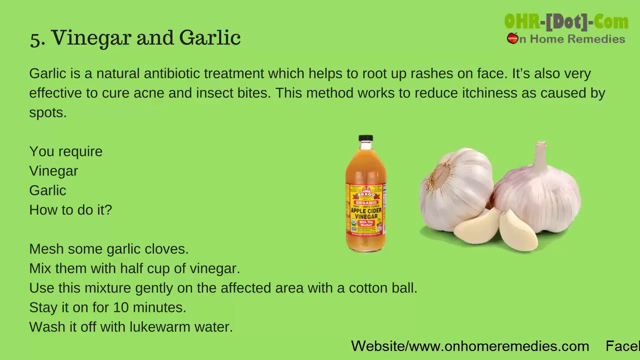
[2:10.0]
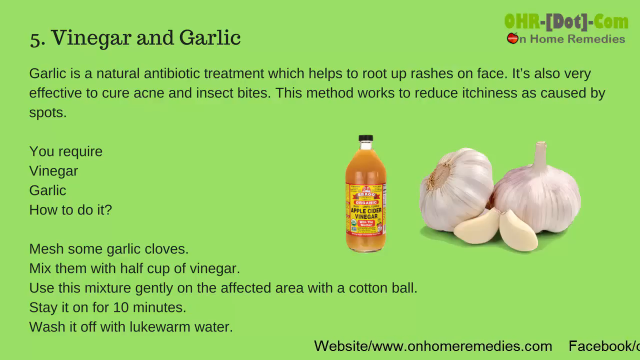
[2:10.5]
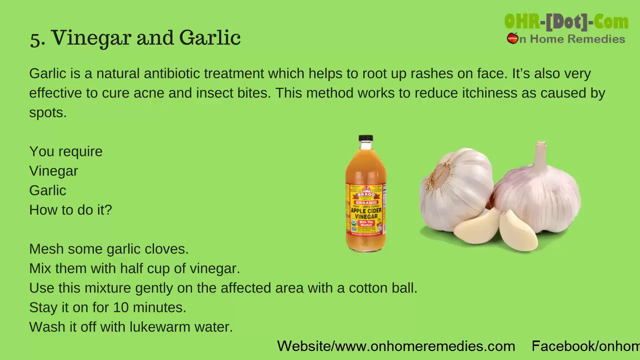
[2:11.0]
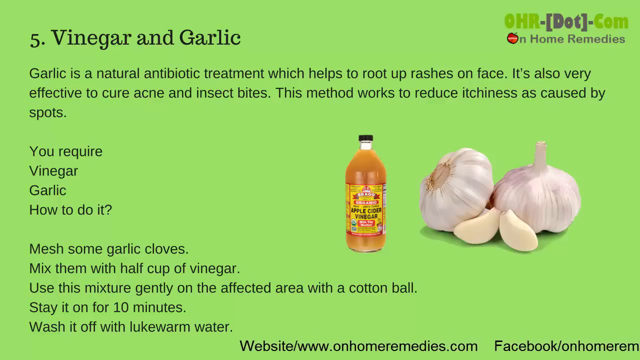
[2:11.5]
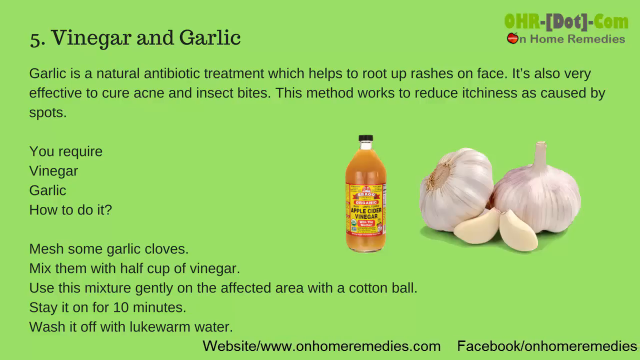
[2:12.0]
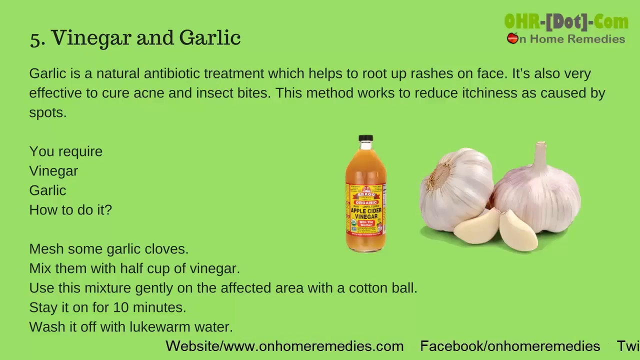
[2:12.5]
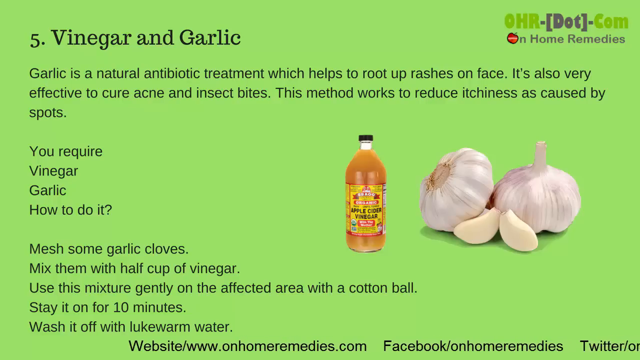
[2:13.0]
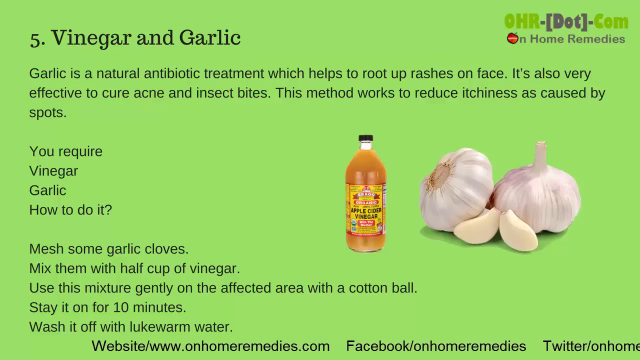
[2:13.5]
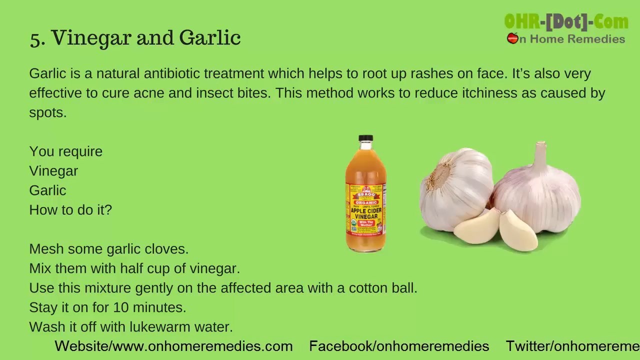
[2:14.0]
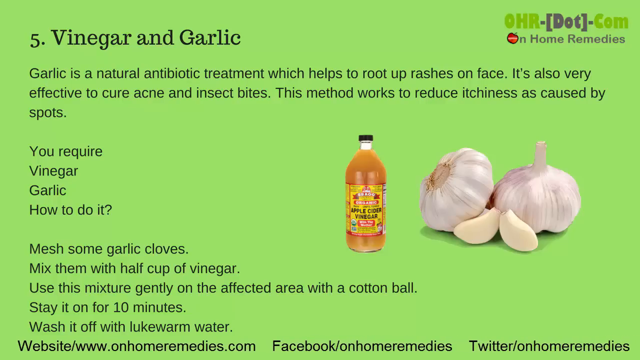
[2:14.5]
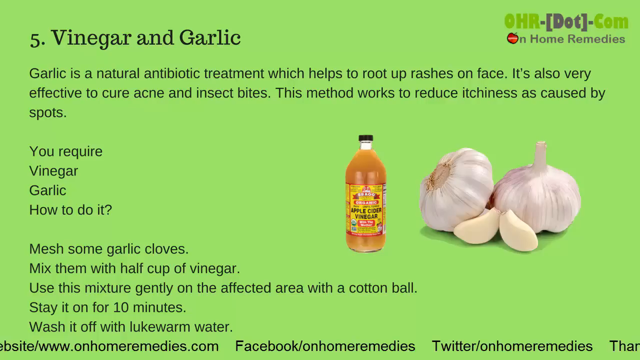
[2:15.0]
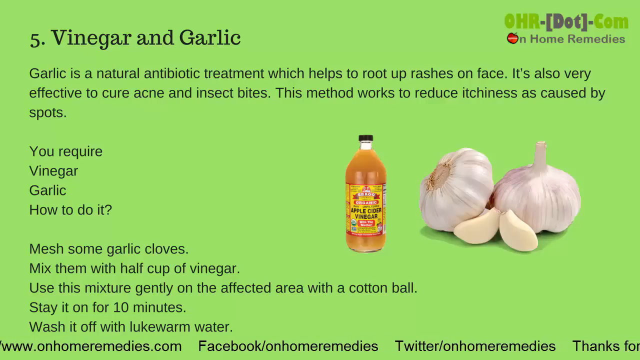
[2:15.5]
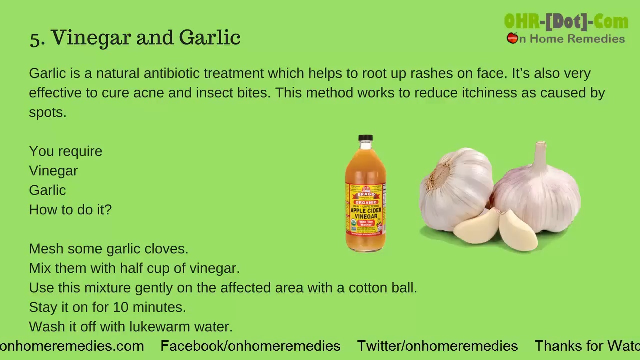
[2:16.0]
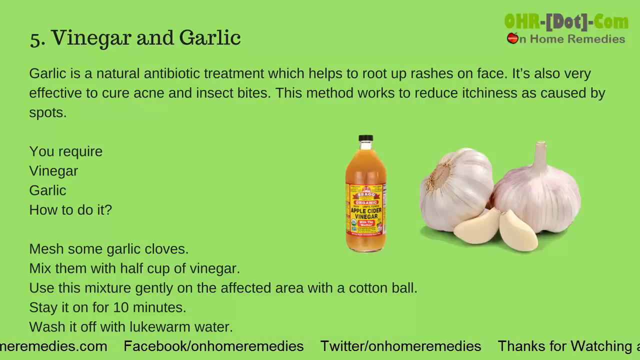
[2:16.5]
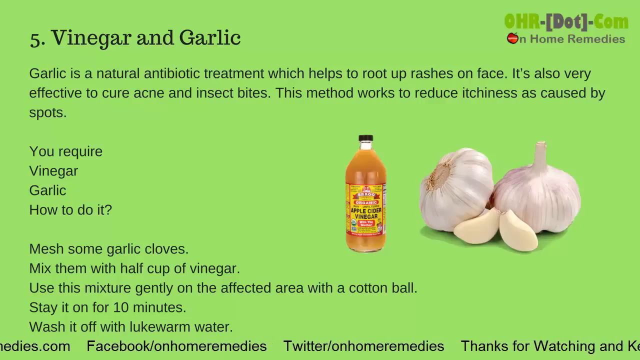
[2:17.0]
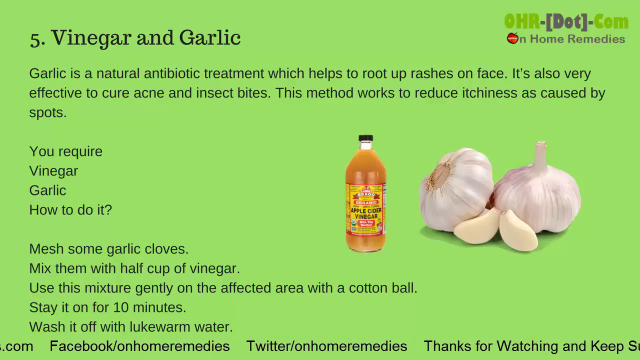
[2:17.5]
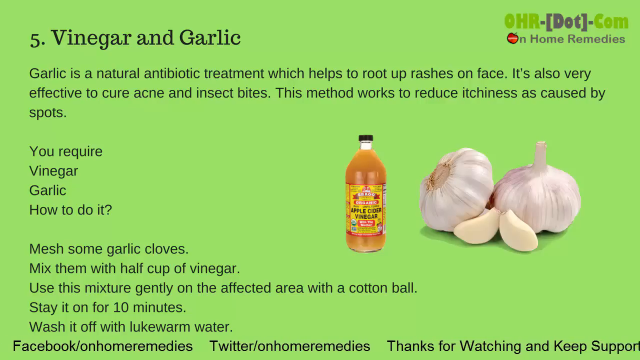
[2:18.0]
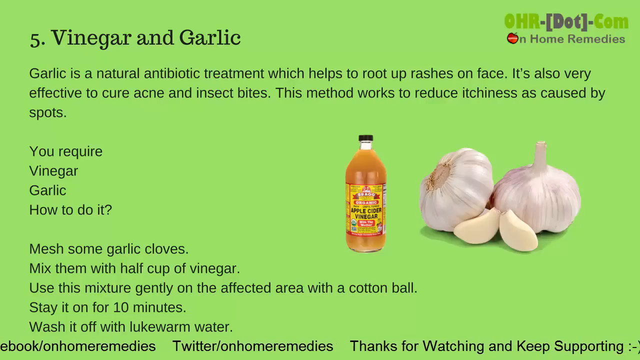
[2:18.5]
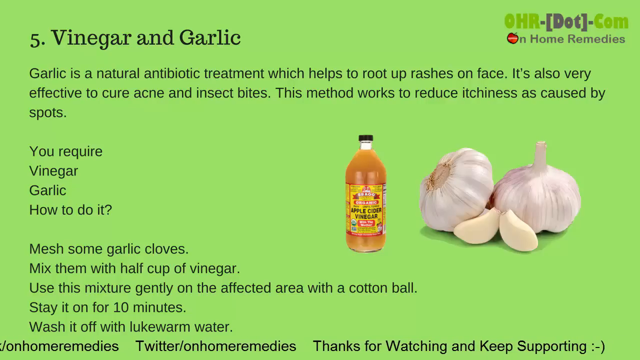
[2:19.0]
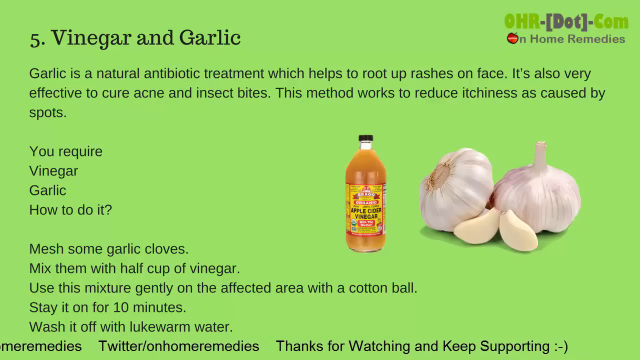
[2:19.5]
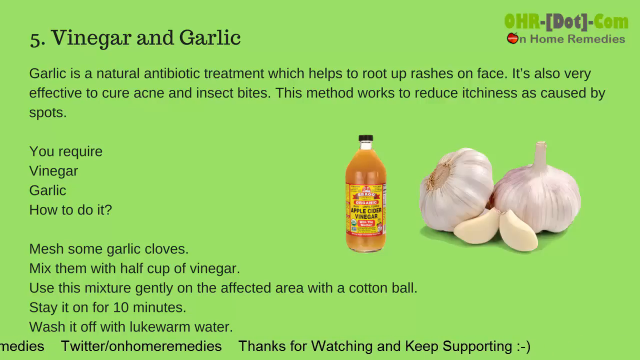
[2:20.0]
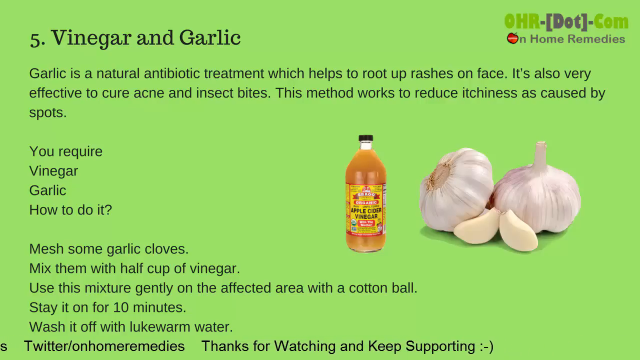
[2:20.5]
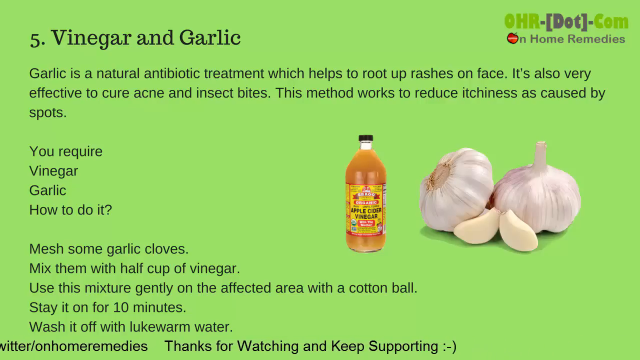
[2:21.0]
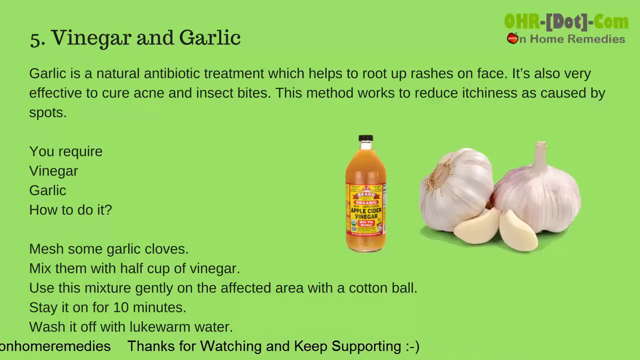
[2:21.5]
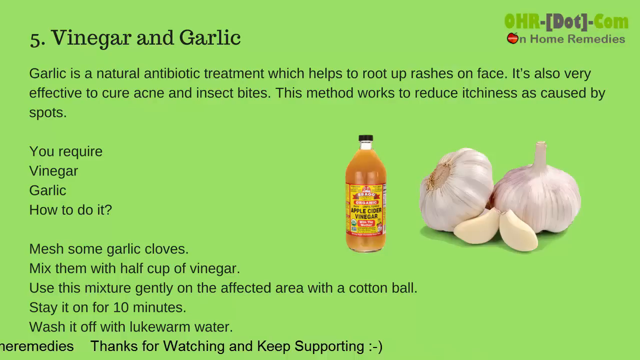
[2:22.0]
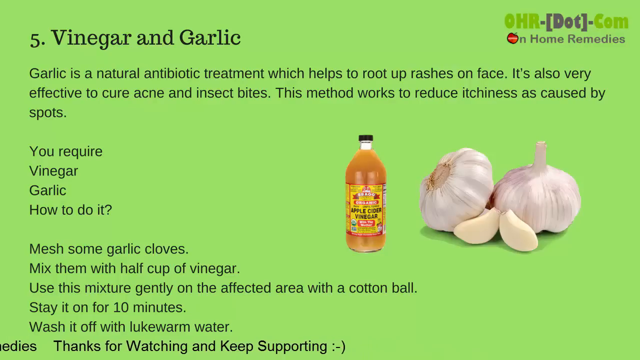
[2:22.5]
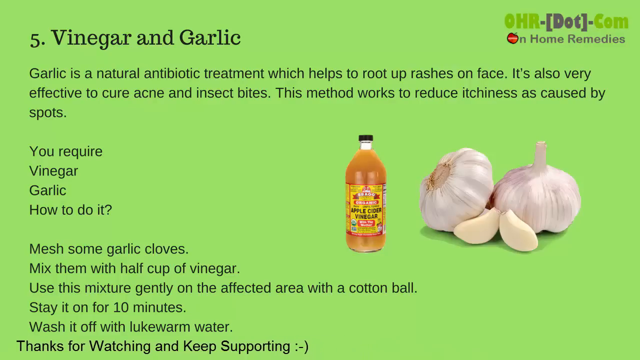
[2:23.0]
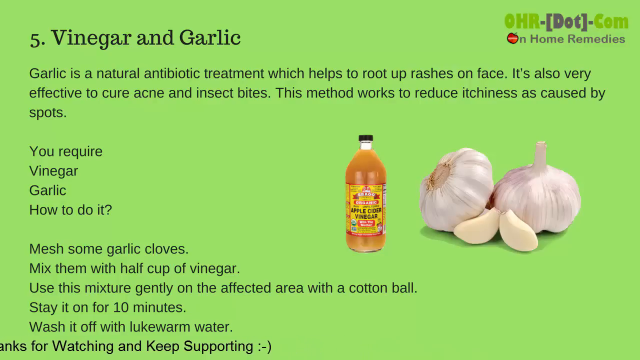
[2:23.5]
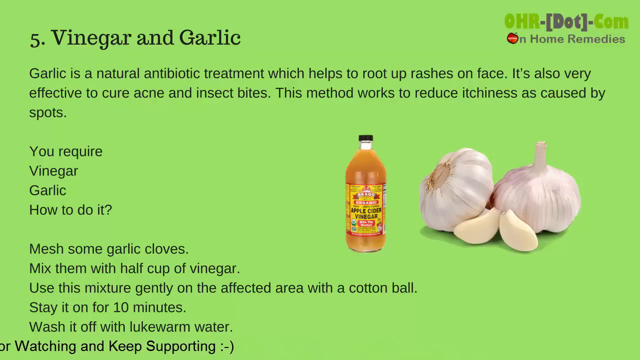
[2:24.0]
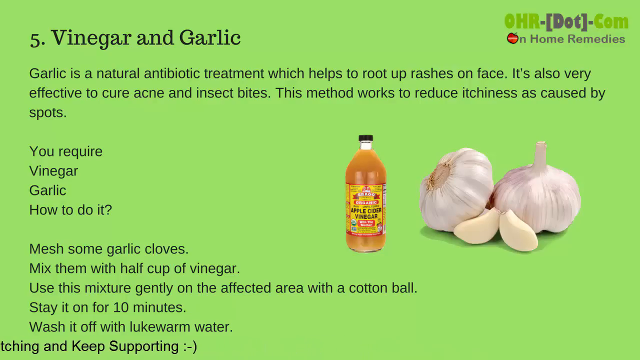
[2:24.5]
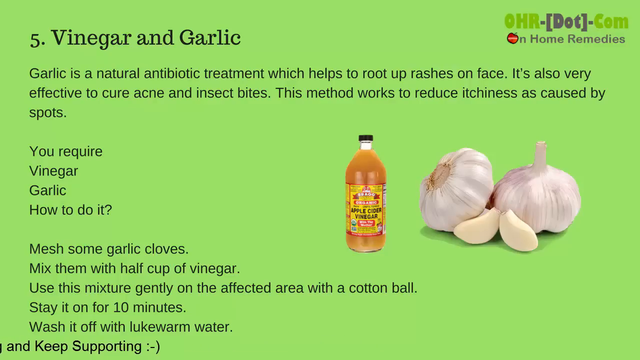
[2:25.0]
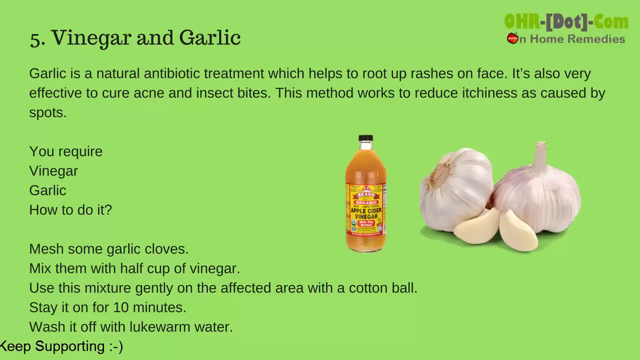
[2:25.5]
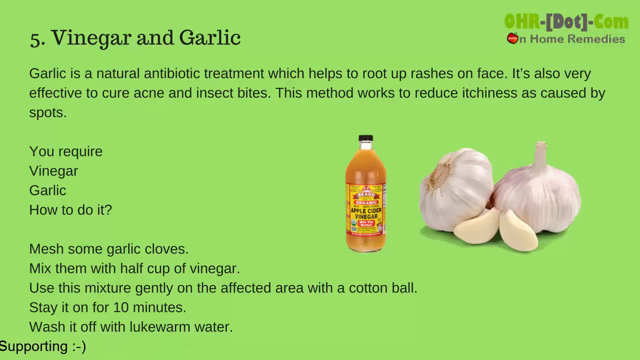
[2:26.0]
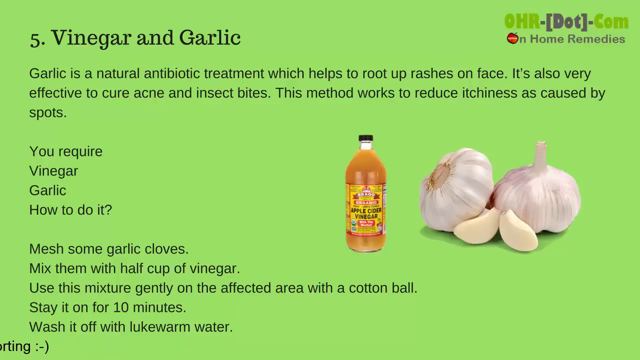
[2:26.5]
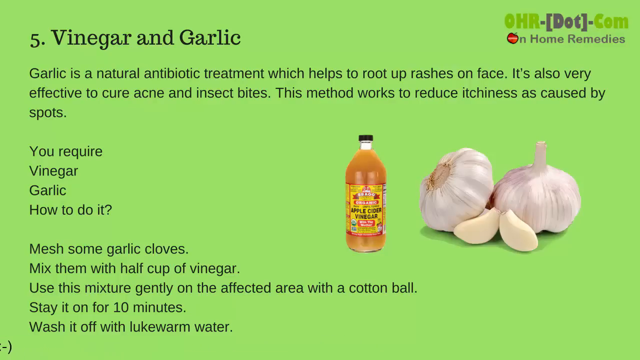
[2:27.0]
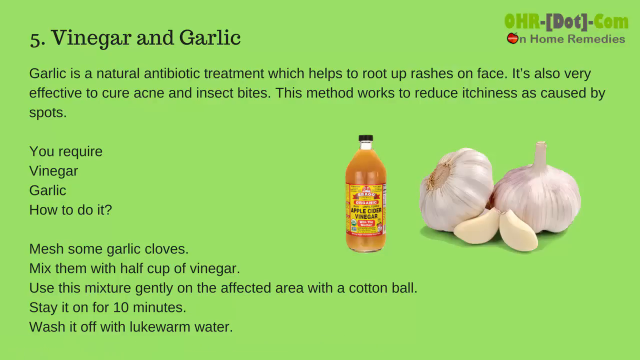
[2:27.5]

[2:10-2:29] The vinegar and garlic home remedy slide, powered by hrm.com in home remedies, continues. It says the remedy helps root up rashes on the face, is effective against insect bites, and works to reduce itches and aches caused by spots, and lists vinegar and garlic as required: mix some garlic cloves with half a cup of vinegar and apply the mixture gently to the affected area with a cotton ball. Garlic and a bottle of vinegar are shown.